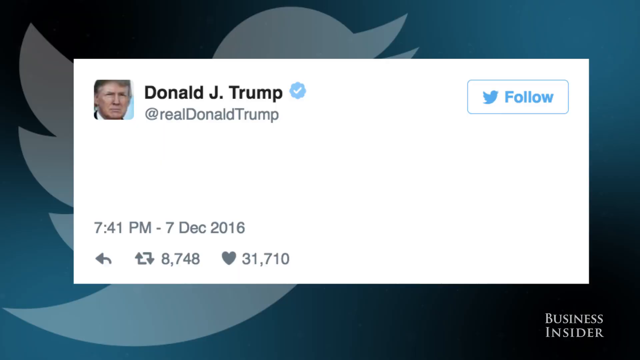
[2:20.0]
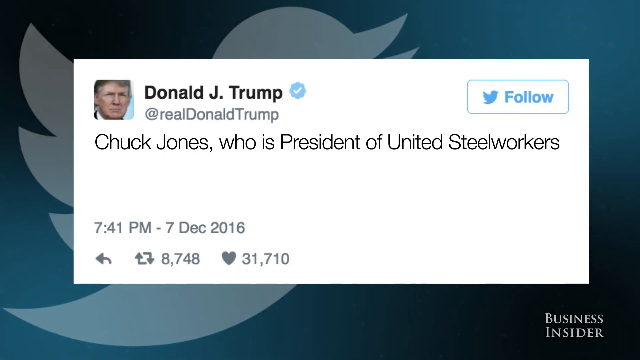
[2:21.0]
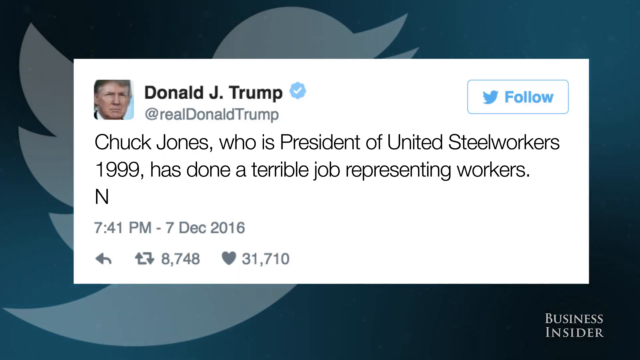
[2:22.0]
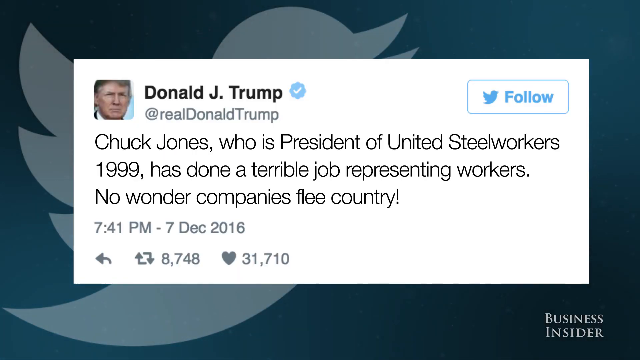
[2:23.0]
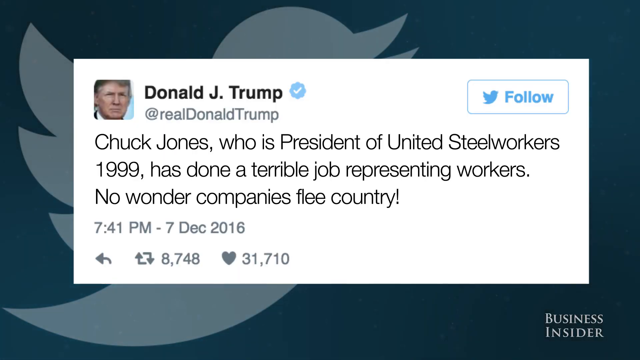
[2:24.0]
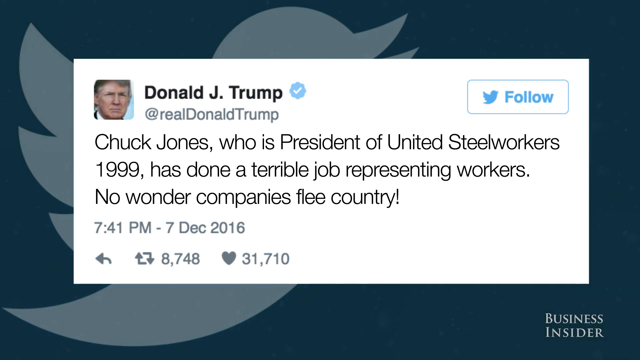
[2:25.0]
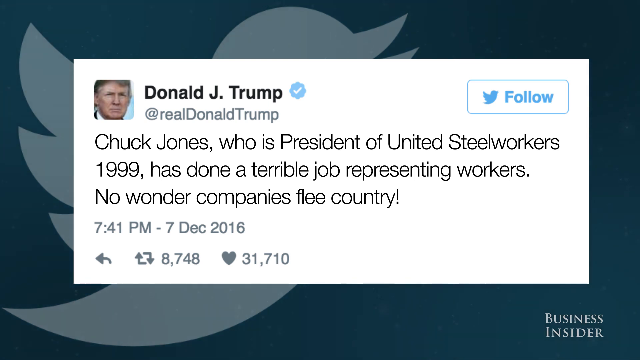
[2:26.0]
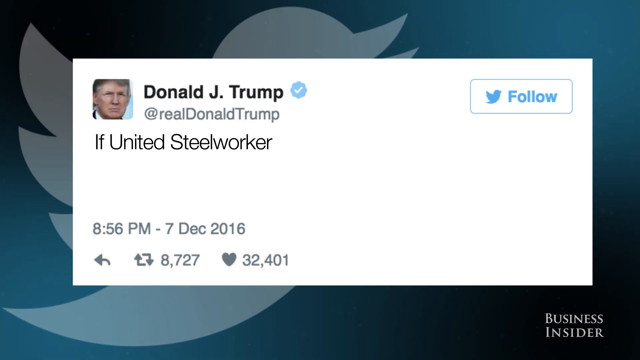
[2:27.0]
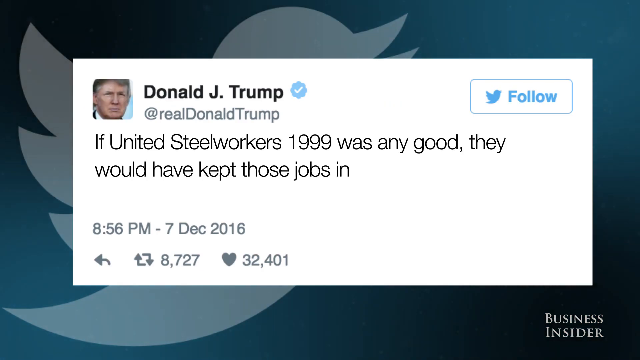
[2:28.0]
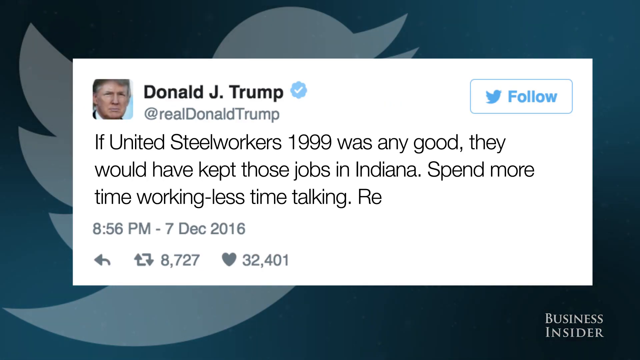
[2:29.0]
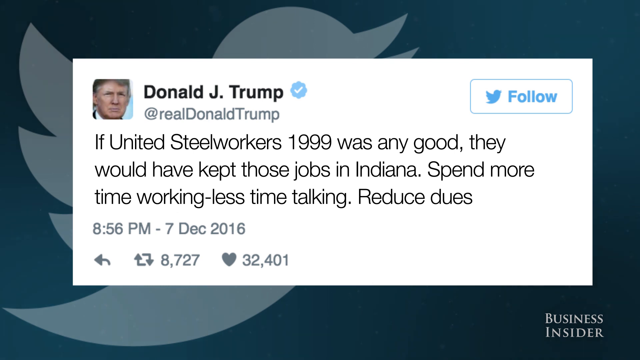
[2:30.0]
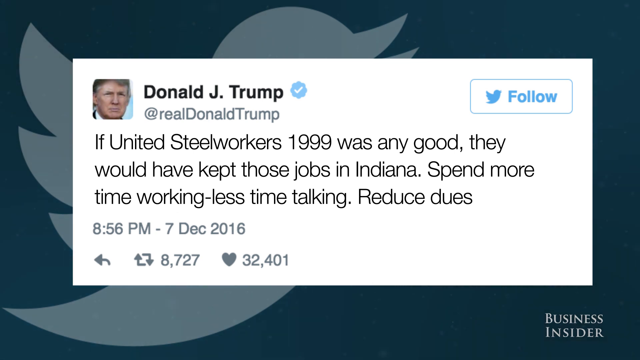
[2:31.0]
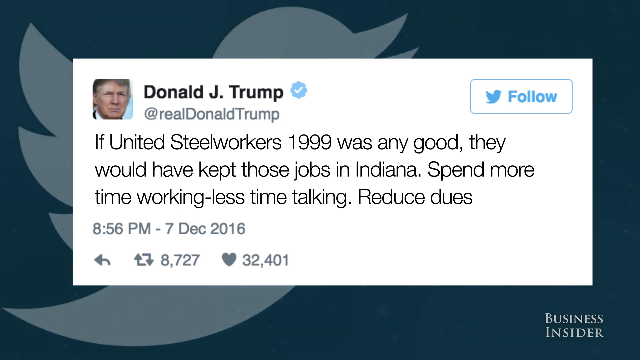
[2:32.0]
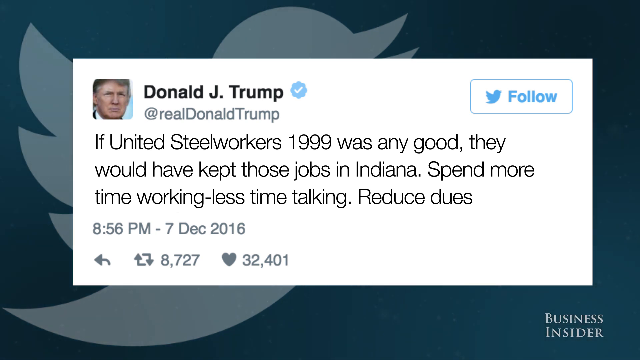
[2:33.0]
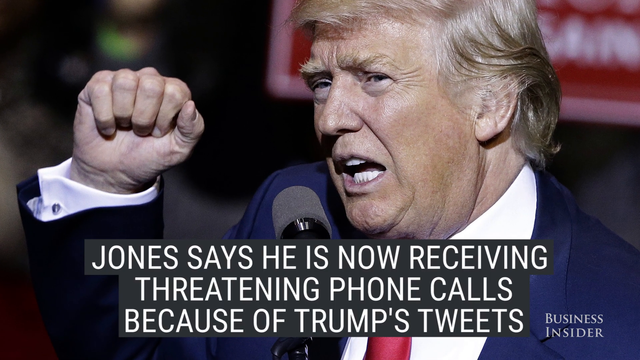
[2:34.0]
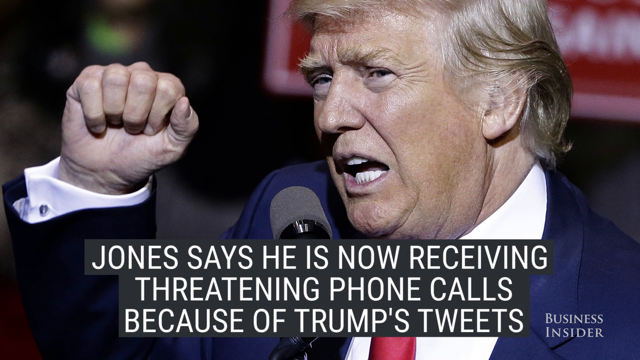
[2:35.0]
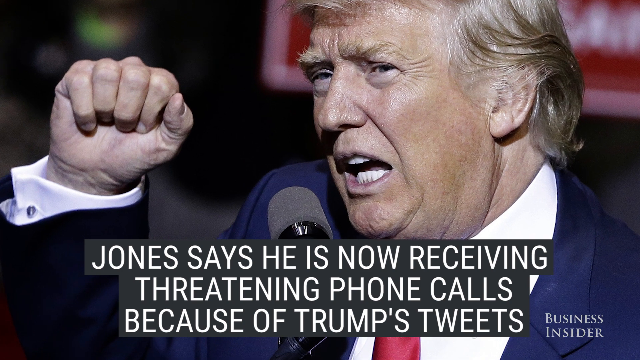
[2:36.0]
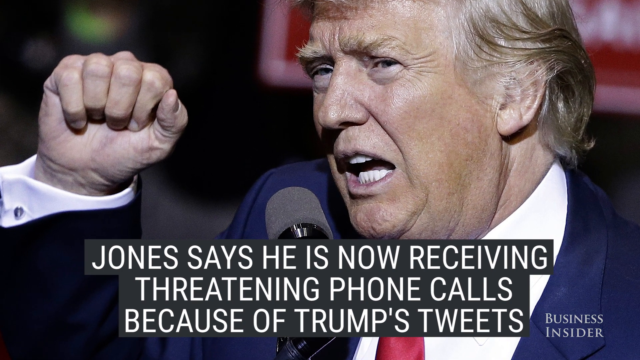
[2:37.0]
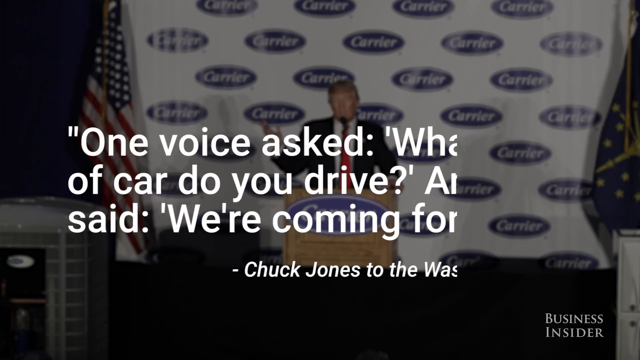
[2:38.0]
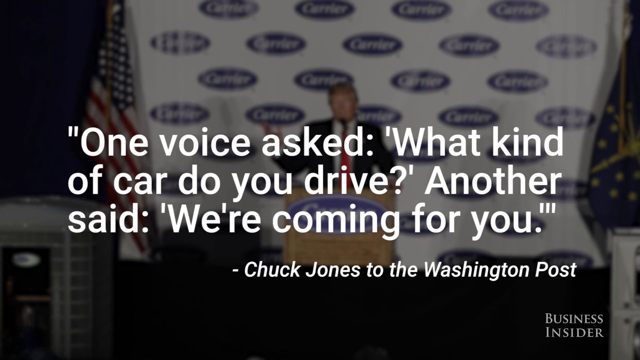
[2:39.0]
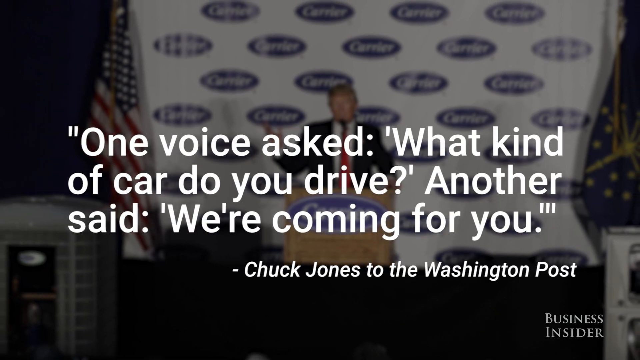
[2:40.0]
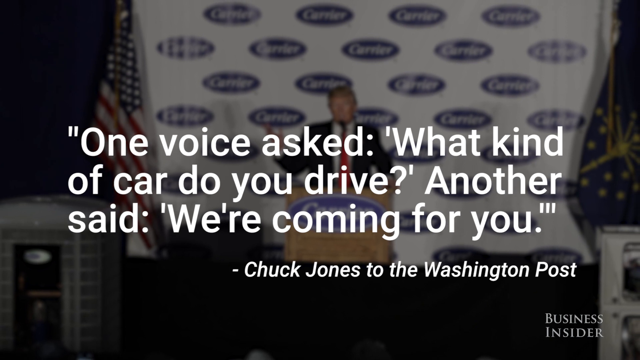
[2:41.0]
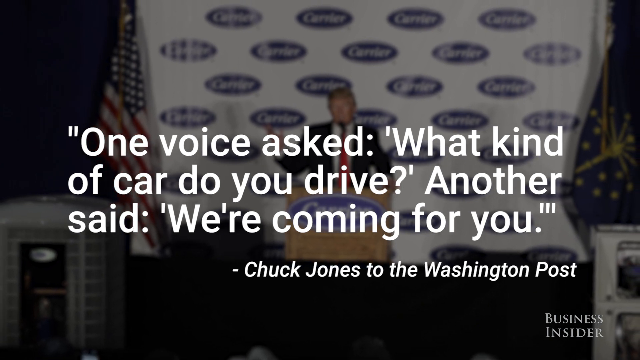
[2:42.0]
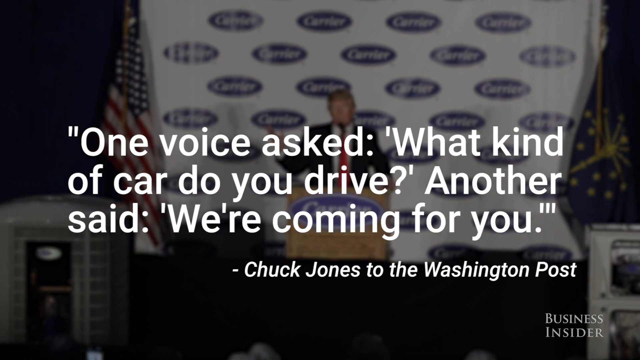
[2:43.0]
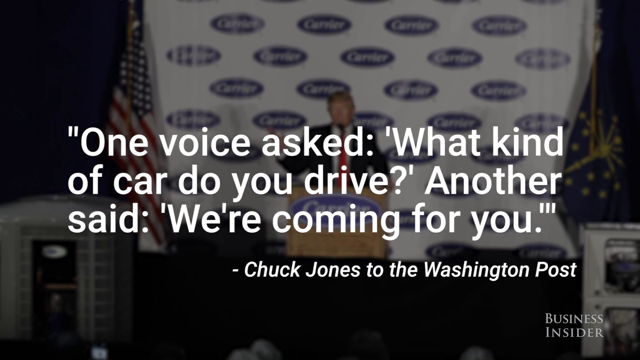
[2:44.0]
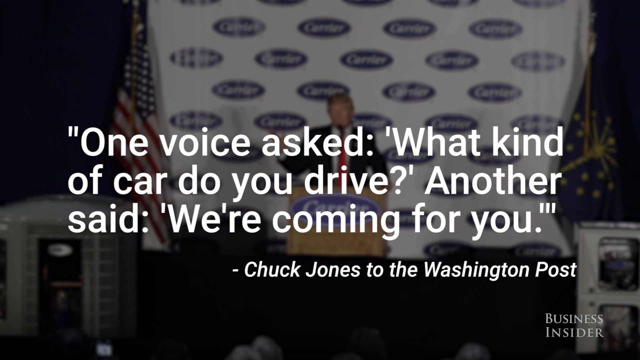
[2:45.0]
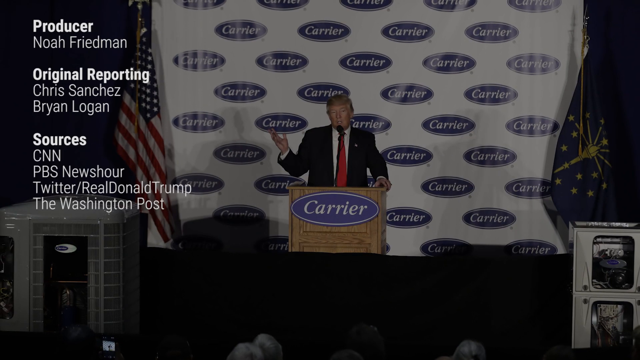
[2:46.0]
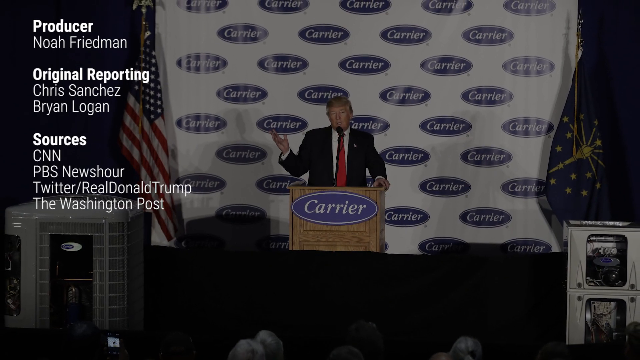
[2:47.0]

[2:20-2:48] White text continues: "we're never leaving this country at all," "I think he's did a lot of negotiations and I have likewise," and "And if you're dealing with people's livelihood." The video transitions back to Donald Trump and Vice President Mike Pence, who appear to be next to two female employees who appear to be wearing gloves and goggles. Trump looks at the closest employee, who appears to be a Caucasian woman with blonde and brown hair in a blue blouse dress, as he stares over her. Above her head is what appears to be a blue air filter cord. The video transitions to Trump at the podium with more white text reading "but criticize the president-elect for the mischaracterization." It then returns to the union boss, as he says "I just wish that he'd had the numbers down and had been up front with 800 people's jobs staying here in Indianapolis."